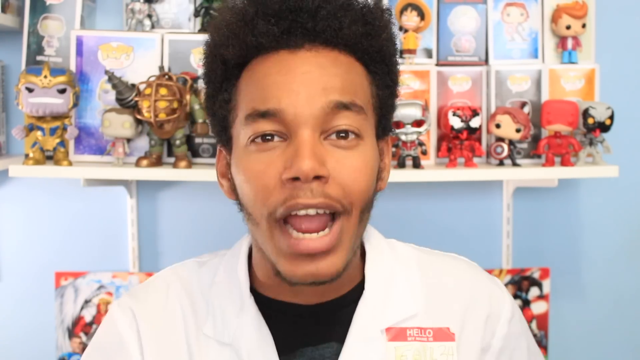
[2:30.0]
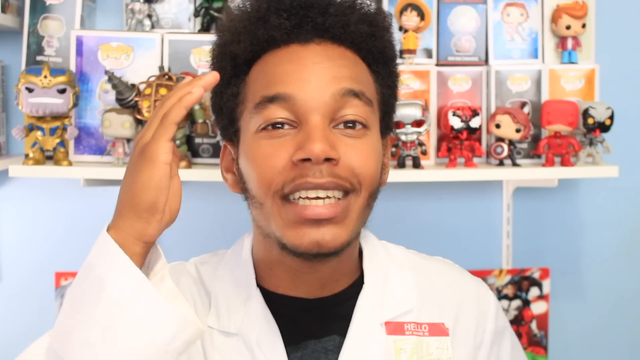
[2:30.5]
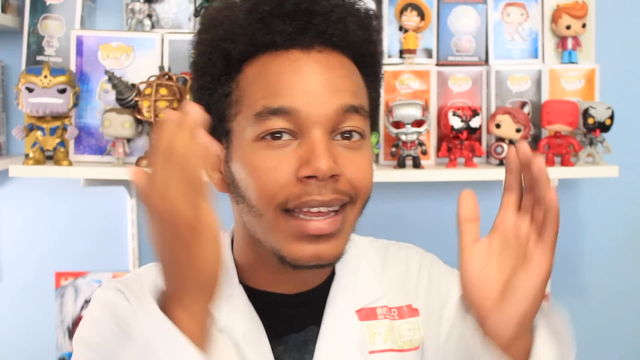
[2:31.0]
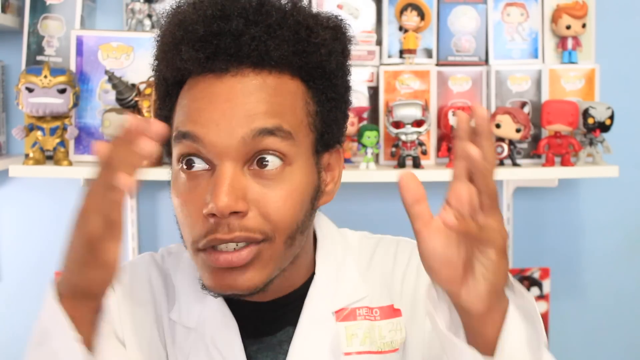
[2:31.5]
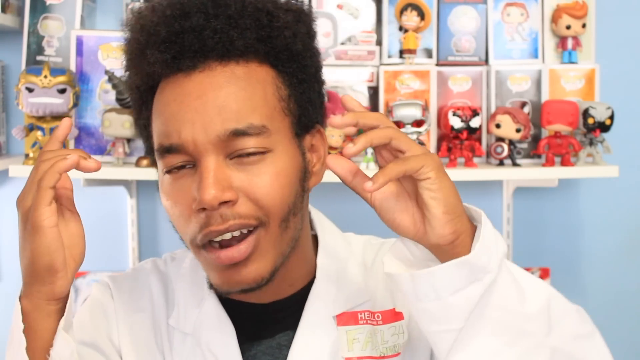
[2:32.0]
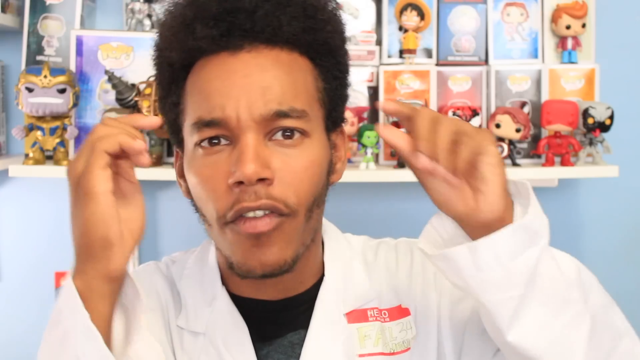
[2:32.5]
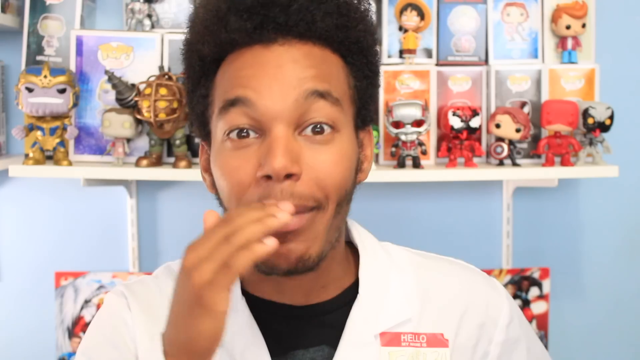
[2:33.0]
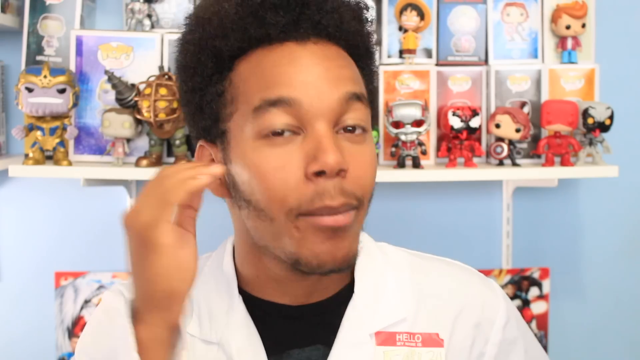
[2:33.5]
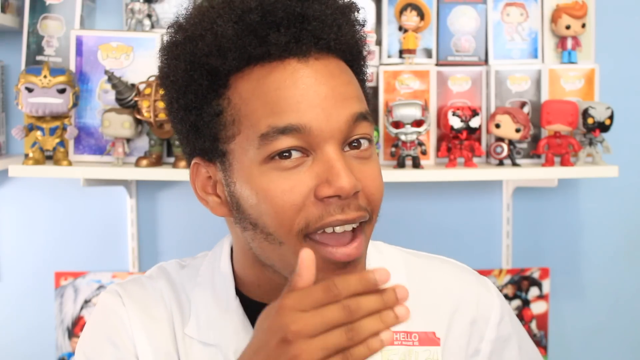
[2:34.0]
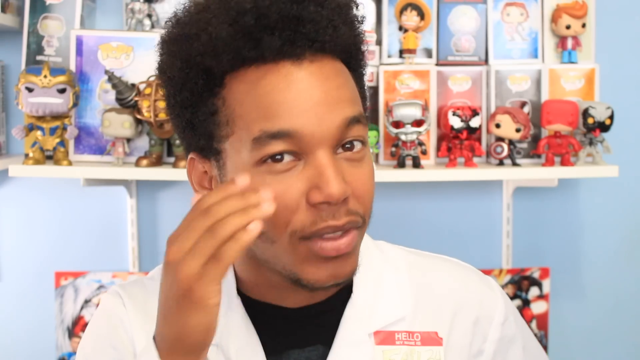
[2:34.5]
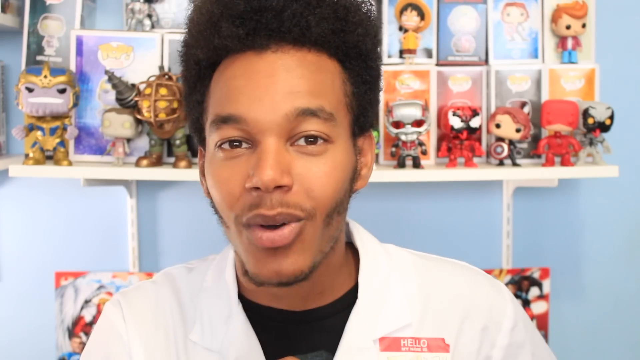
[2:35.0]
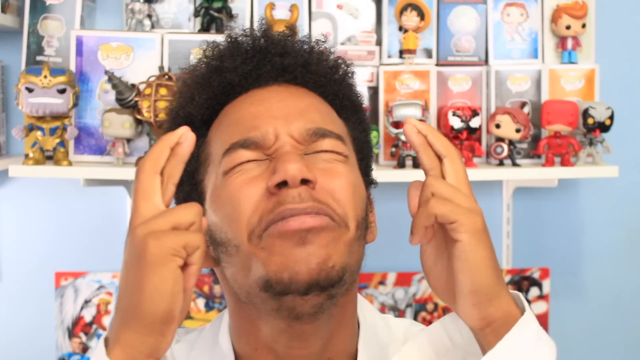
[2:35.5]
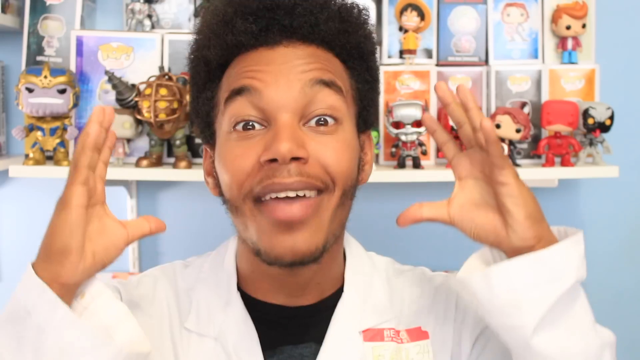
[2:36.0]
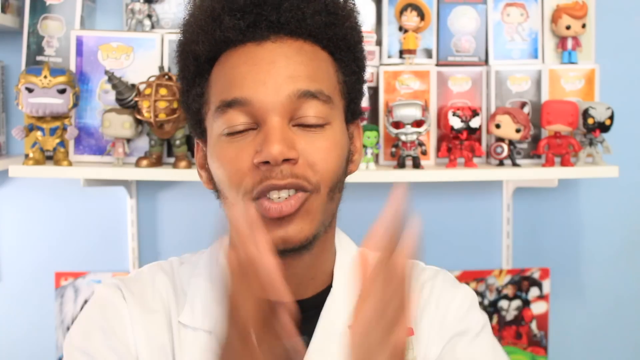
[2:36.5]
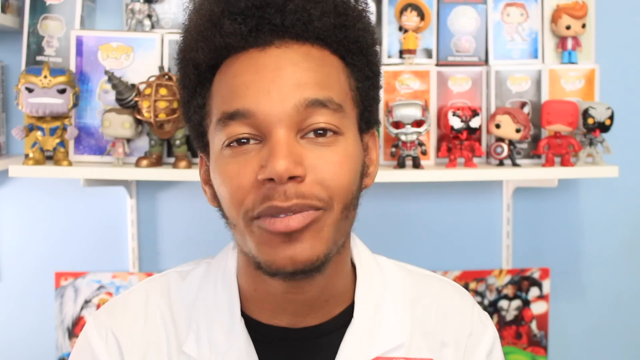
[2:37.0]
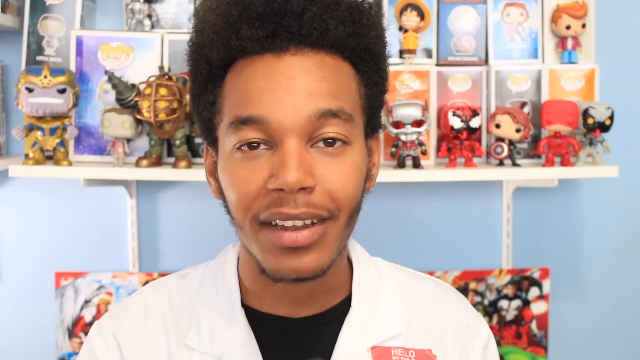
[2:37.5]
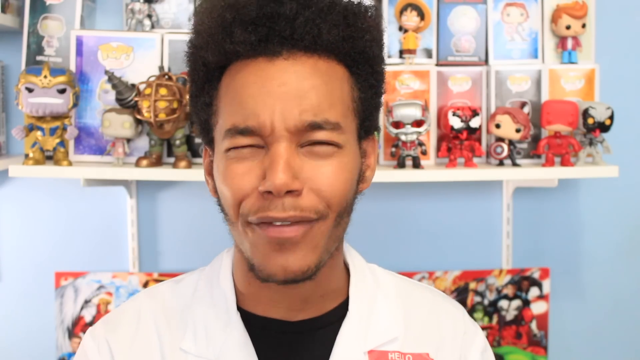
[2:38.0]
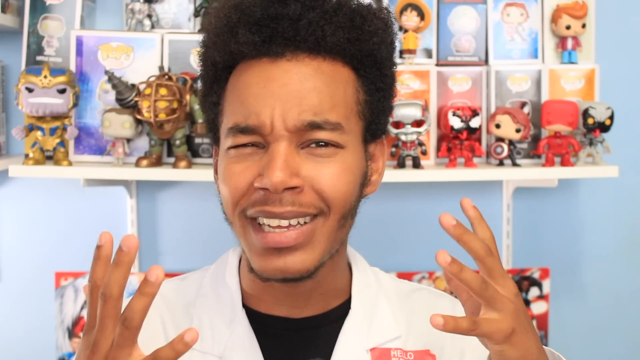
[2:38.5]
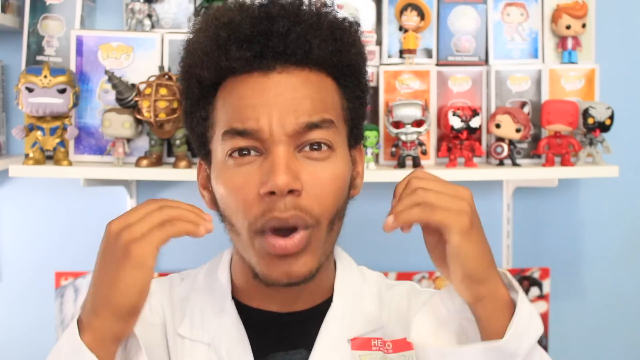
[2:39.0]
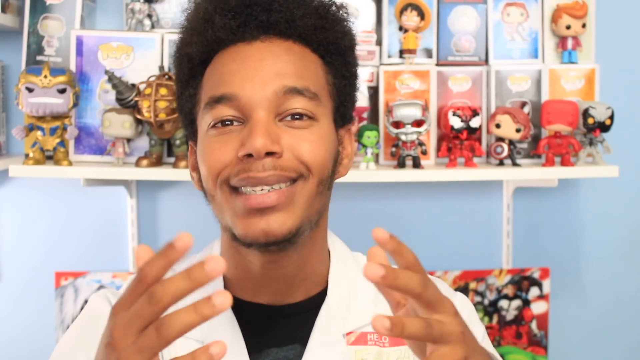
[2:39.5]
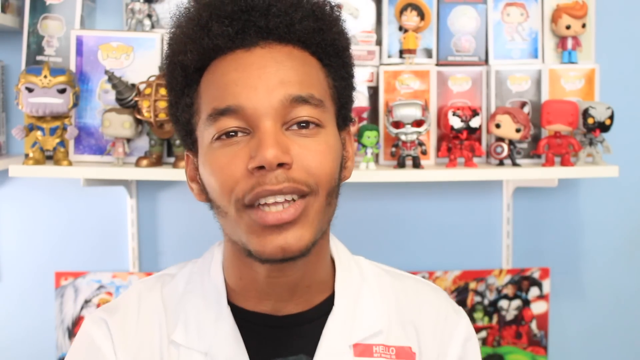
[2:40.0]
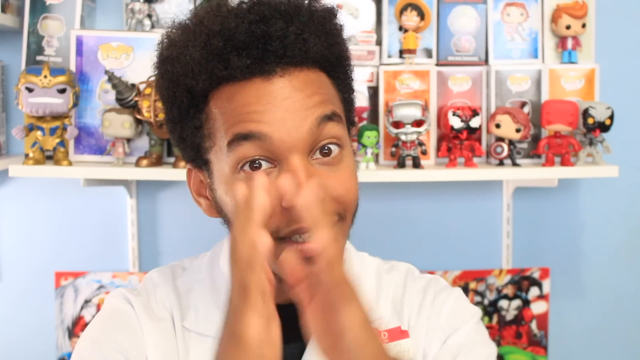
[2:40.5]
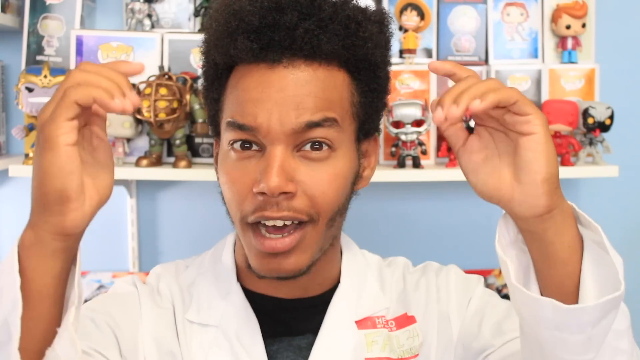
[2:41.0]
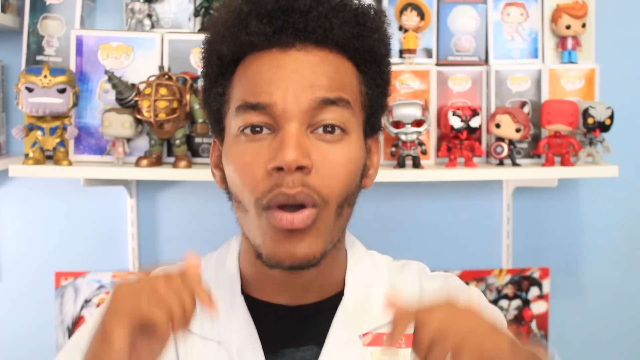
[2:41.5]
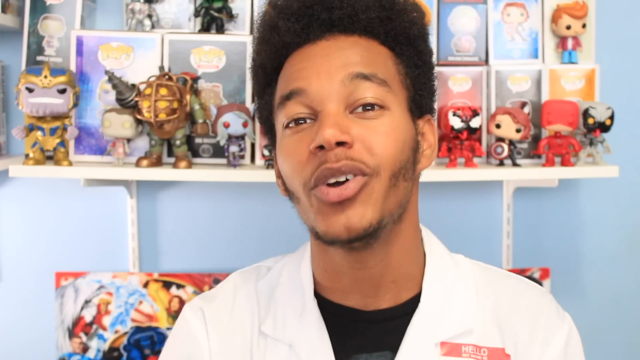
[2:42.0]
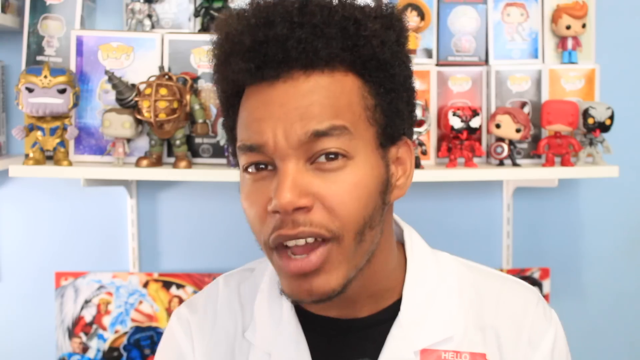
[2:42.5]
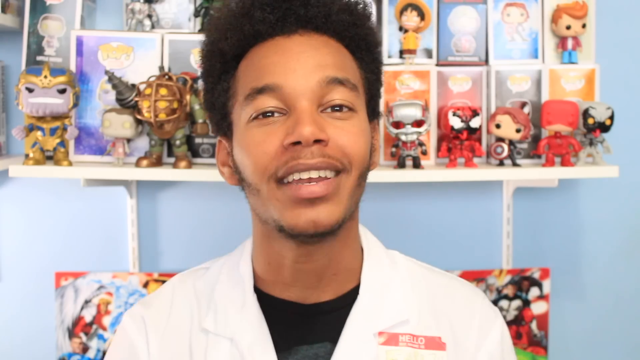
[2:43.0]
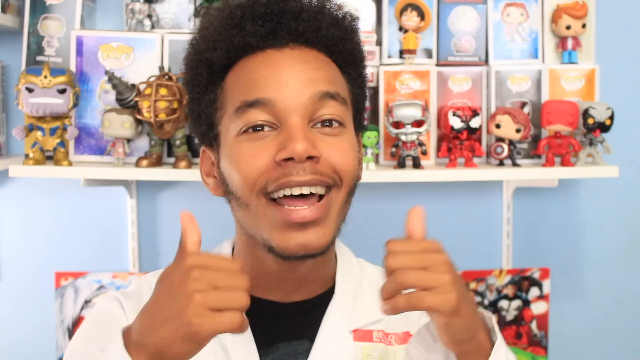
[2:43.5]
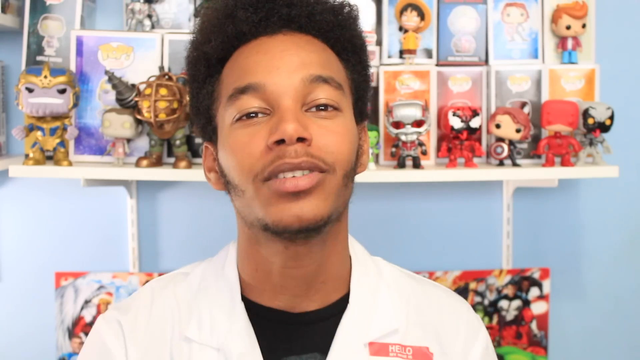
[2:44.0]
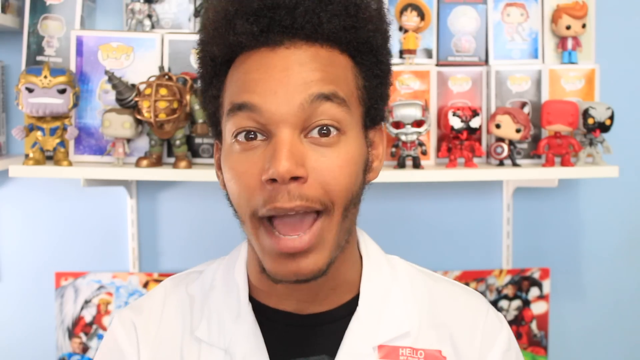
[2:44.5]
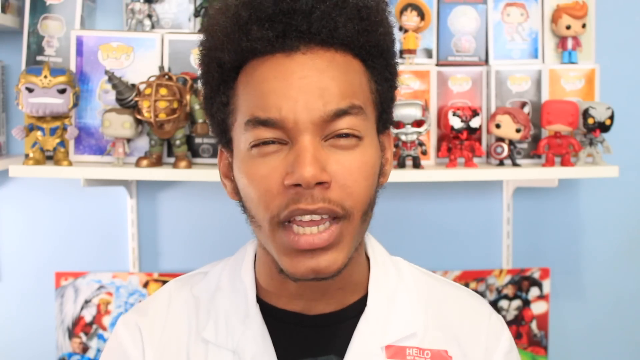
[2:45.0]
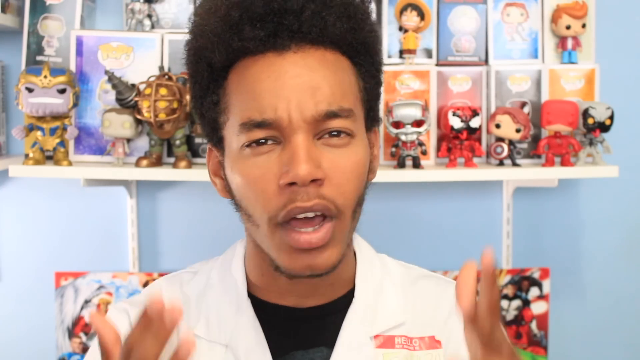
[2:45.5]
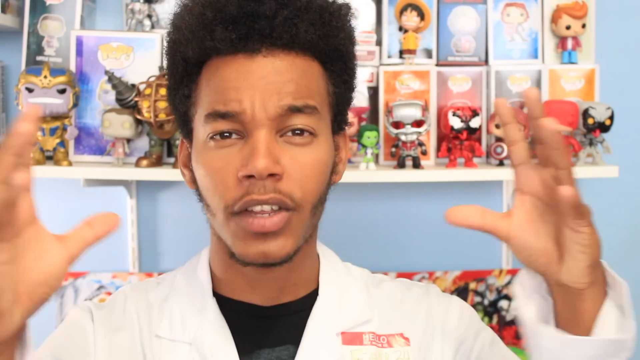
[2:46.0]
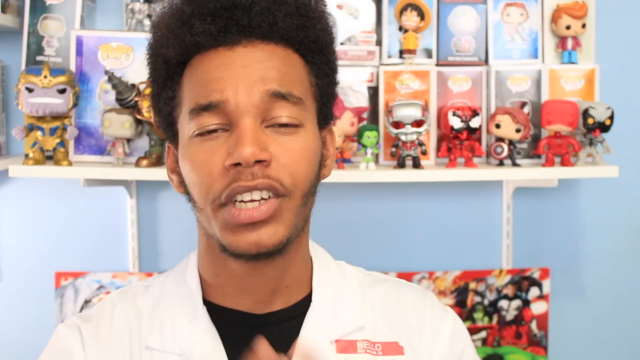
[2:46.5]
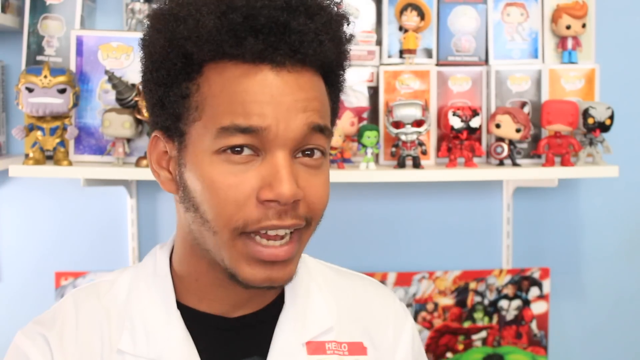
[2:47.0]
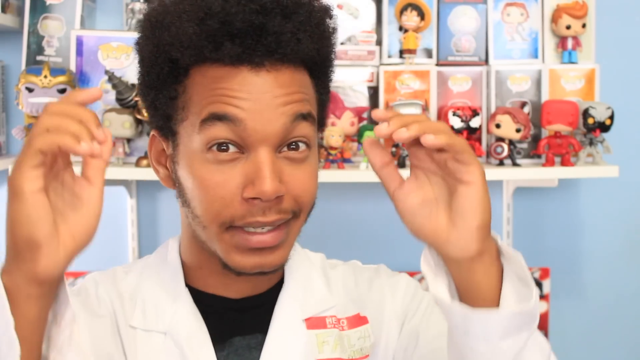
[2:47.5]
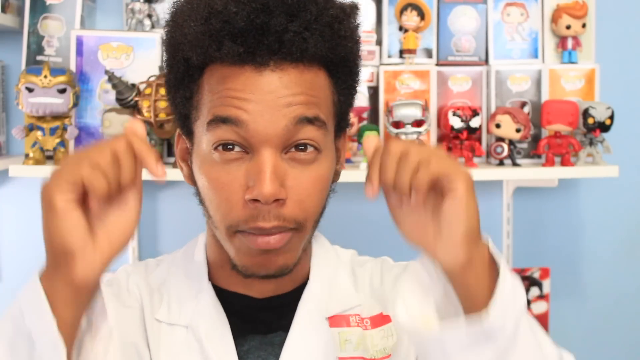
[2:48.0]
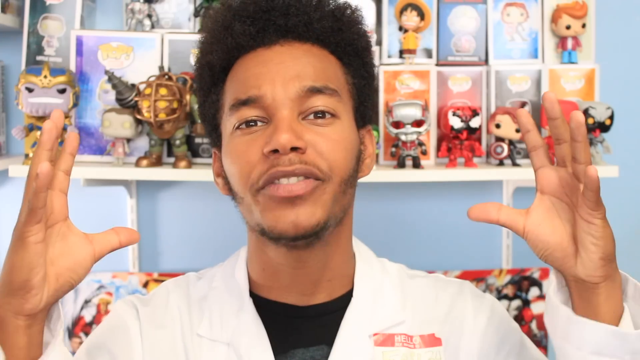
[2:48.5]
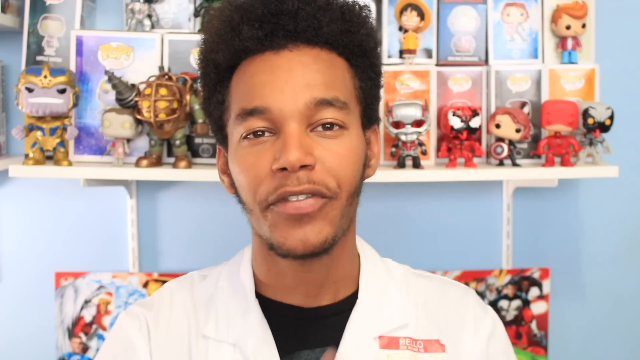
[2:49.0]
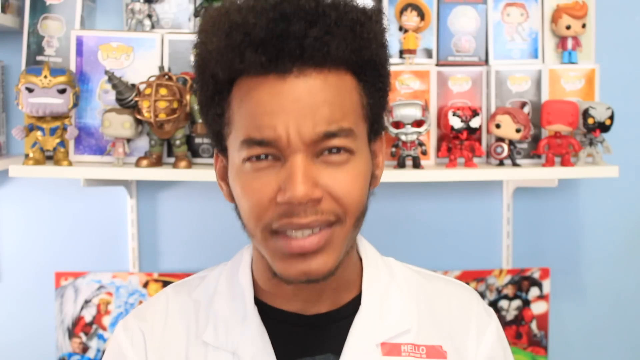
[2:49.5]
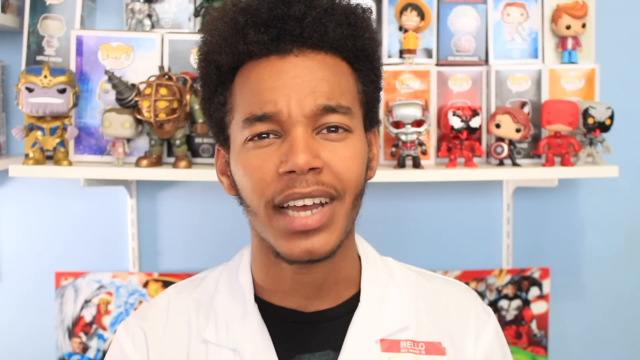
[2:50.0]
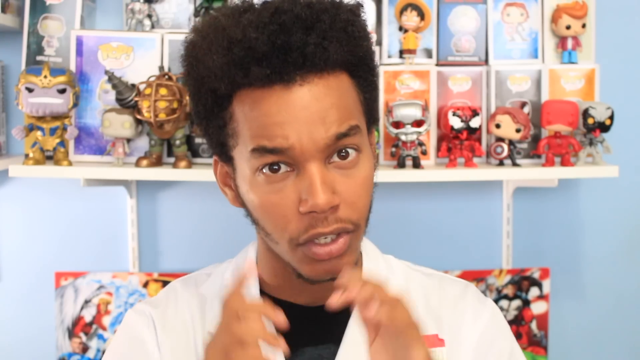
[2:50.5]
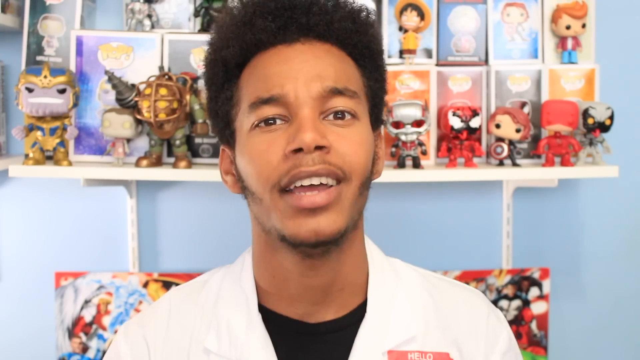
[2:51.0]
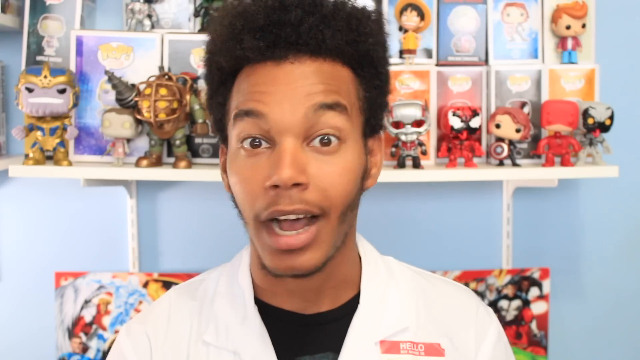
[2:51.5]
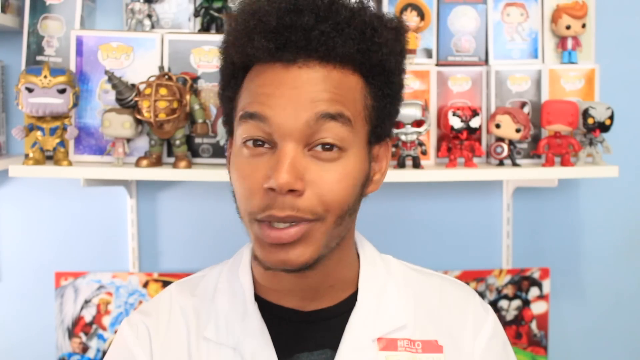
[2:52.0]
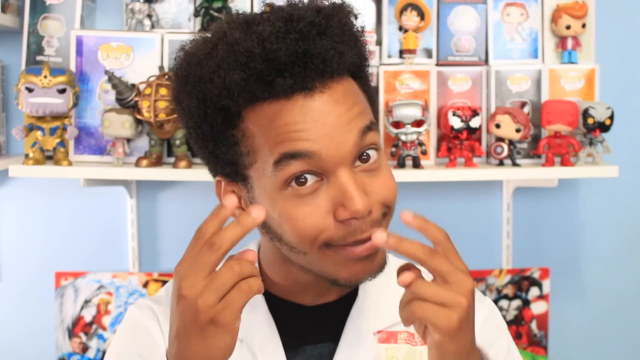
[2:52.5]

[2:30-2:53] The man seems immersed in a deep explanation. Behind him, various cartoon characters are displayed on shelves mounted on a blue wall; some of the characters in the background wear dark glasses, and at the bottom some cartoon characters are placed in various frames. The hinges of the shelves on the wall are visible. The man has black afro-style hair, a clean-shaven beard and a moustache, light skin and black eyes. The video's tones are muted. He smiles, seeming to find what he is talking about interesting.